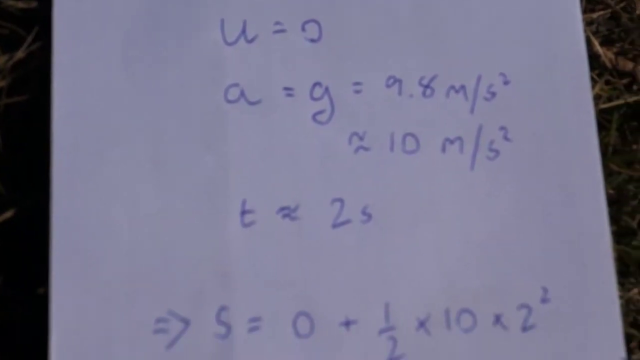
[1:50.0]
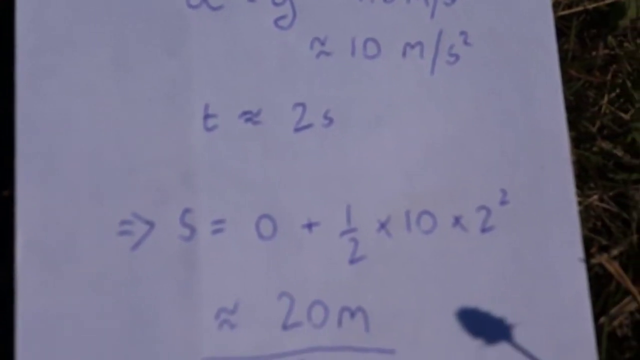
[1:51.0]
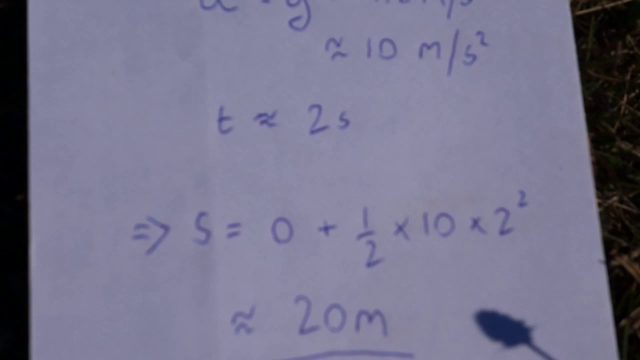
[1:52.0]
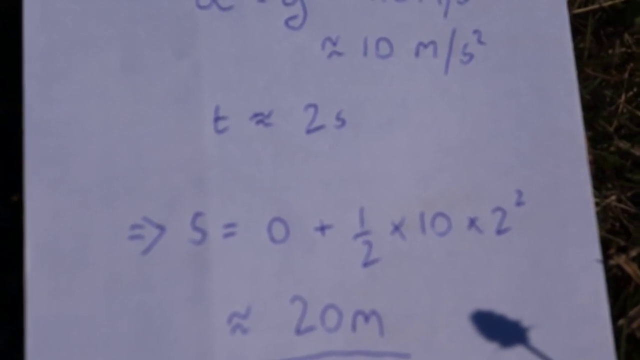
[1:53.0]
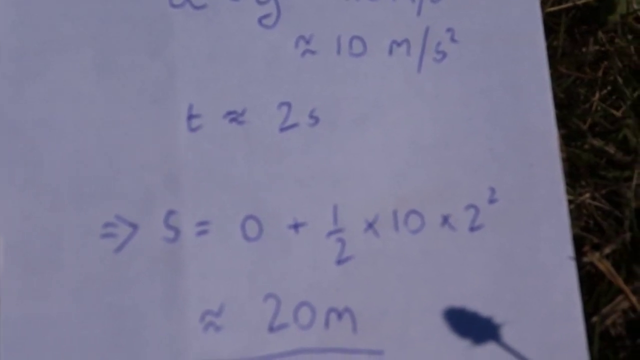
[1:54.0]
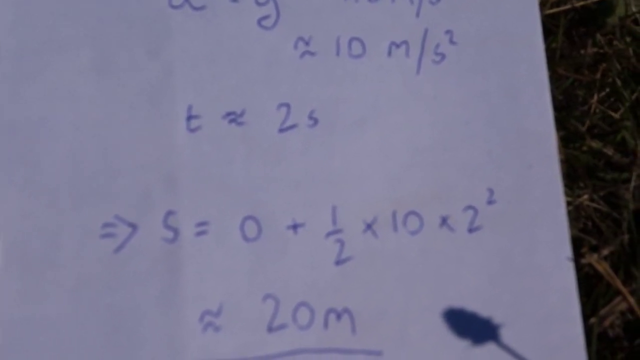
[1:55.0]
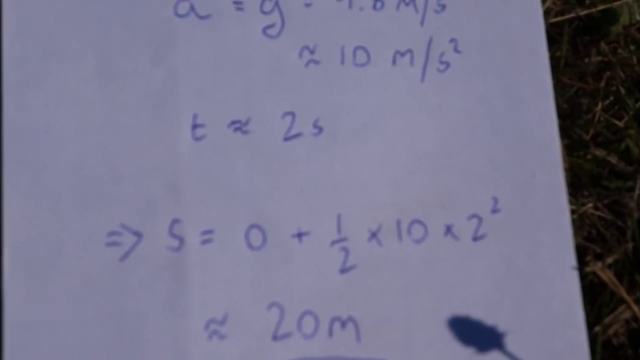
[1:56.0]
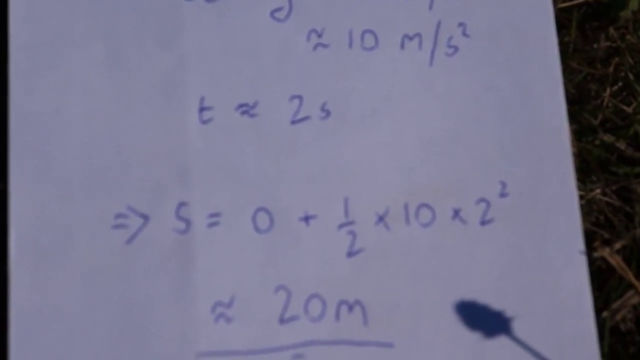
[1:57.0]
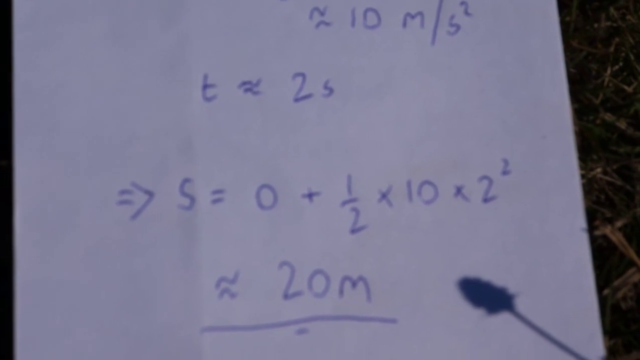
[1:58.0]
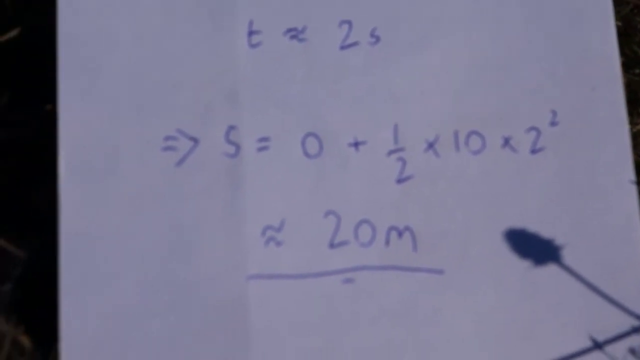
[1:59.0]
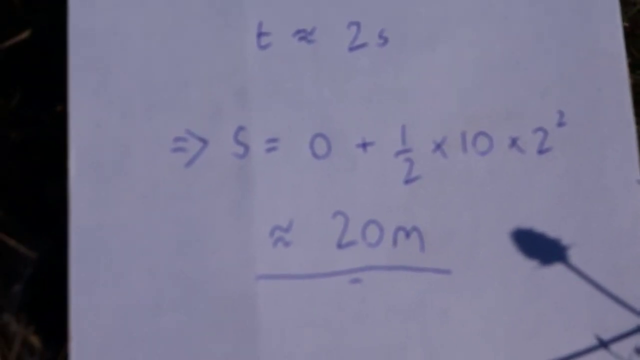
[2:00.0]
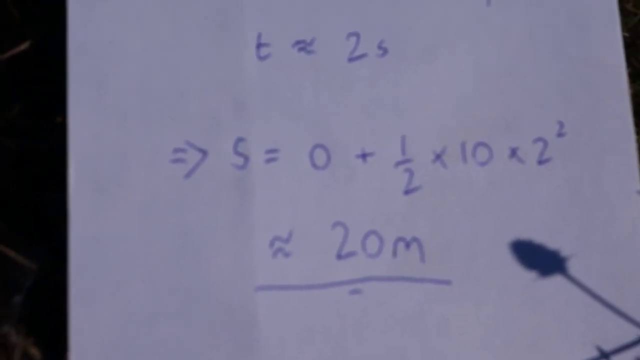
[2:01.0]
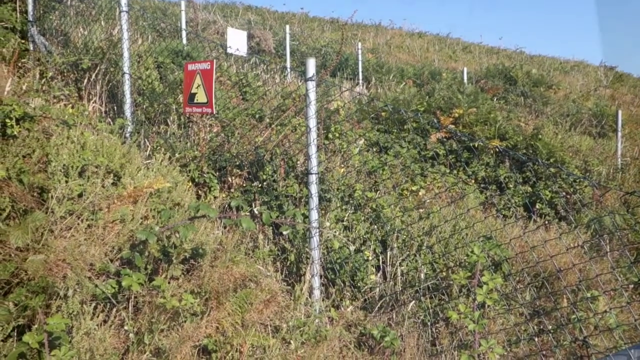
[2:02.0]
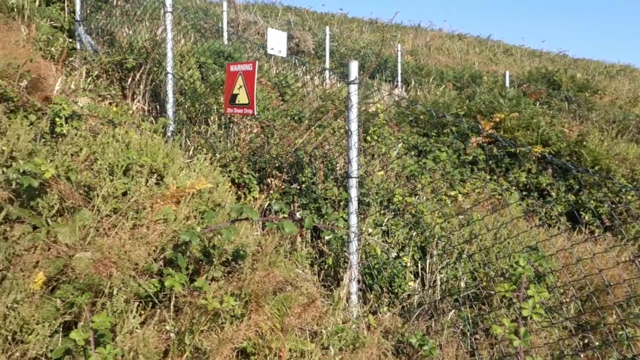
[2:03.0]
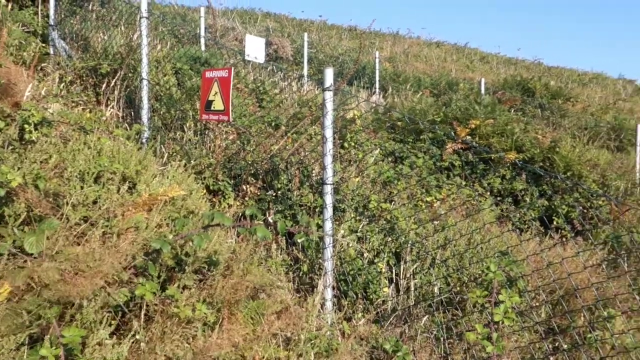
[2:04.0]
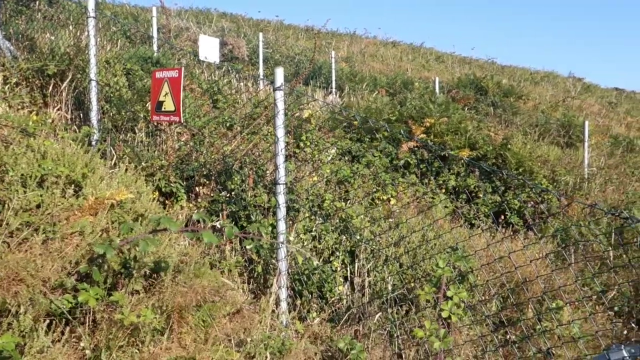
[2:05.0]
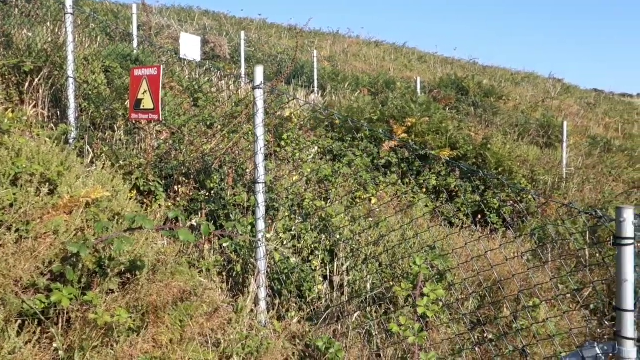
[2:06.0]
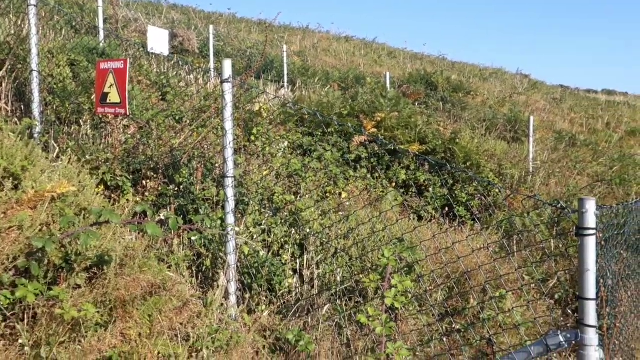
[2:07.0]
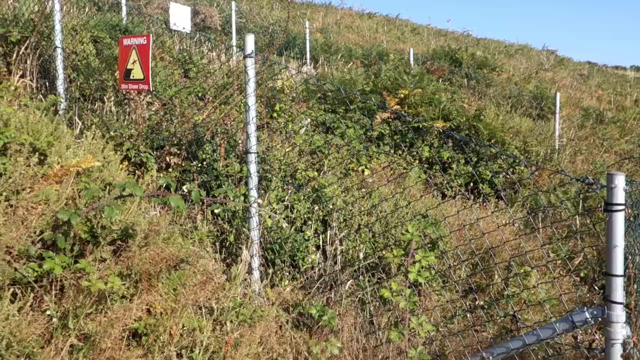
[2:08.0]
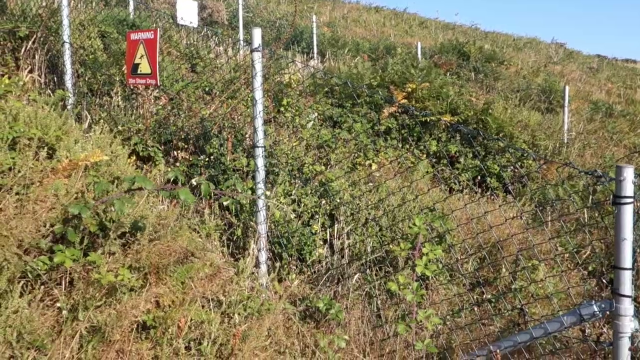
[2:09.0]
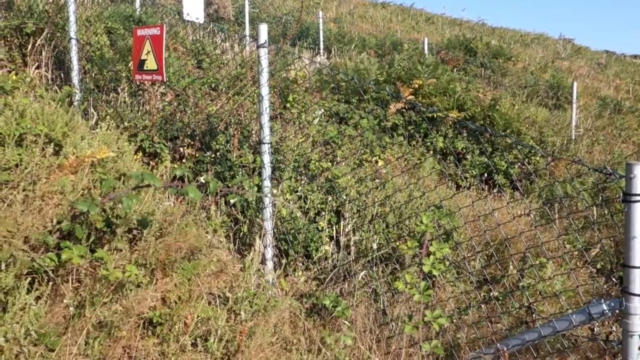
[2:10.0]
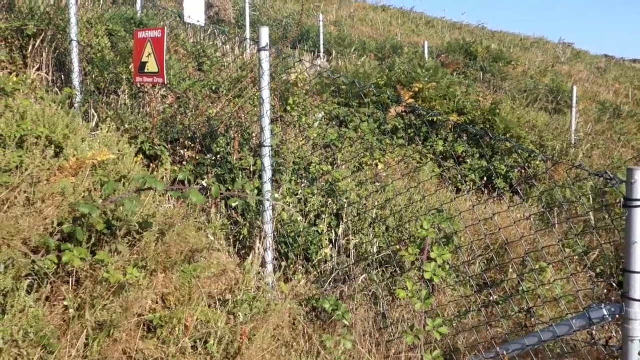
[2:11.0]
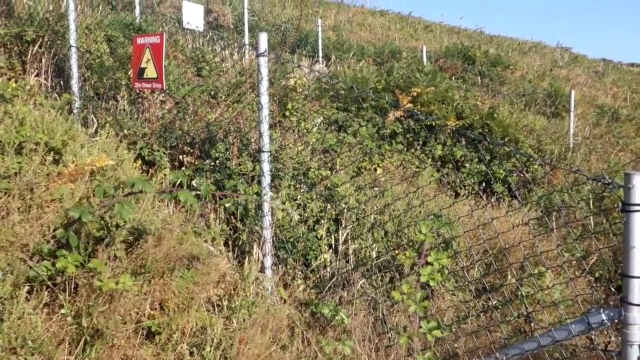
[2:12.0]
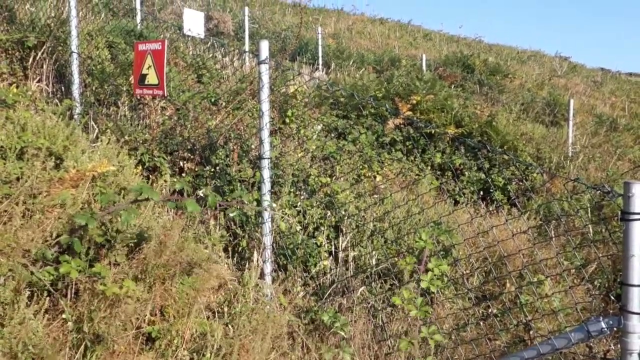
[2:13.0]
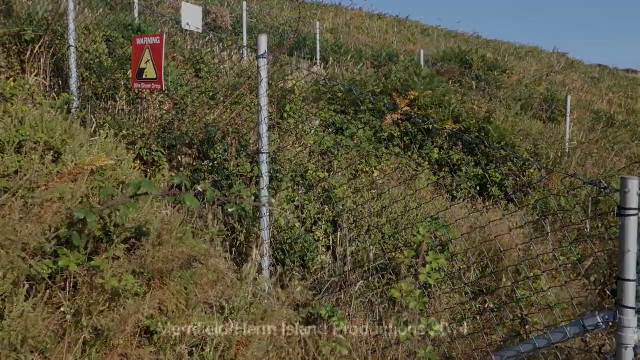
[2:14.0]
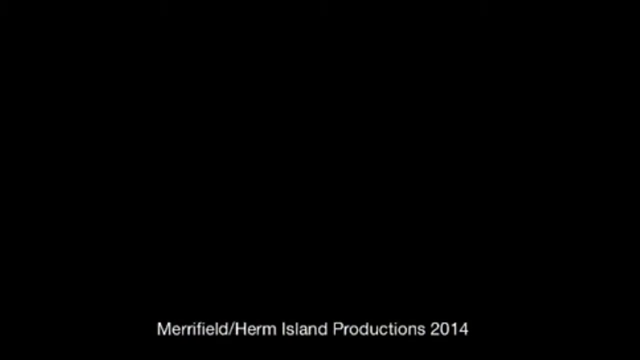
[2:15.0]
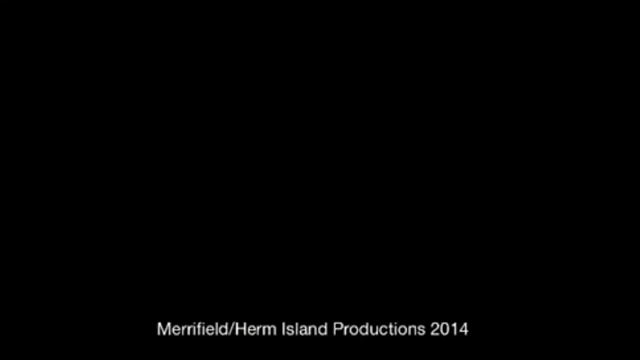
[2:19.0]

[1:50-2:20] An unsteady shot shows a white sheet of paper occupying the entire left part of the screen, leaving only a very small area on the right where the surface beneath it is visible. The sheet bears various mathematical formulas and calculations marked in blue pen. The next shot shows hills with vegetation, a completely cloudless blue sky in the right corner, and, in the upper left part, a square red sign hanging on a metal net, with writing that is not clearly readable at this distance. The video ends on a black background with white writing positioned at the bottom of the frame.